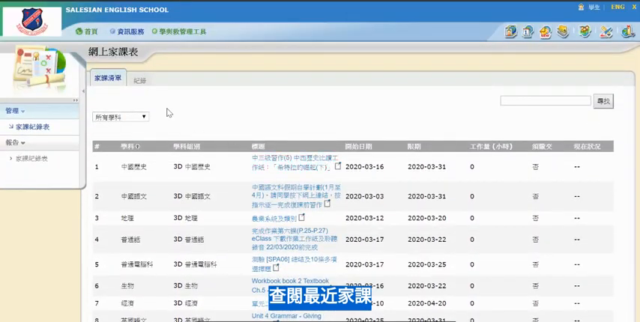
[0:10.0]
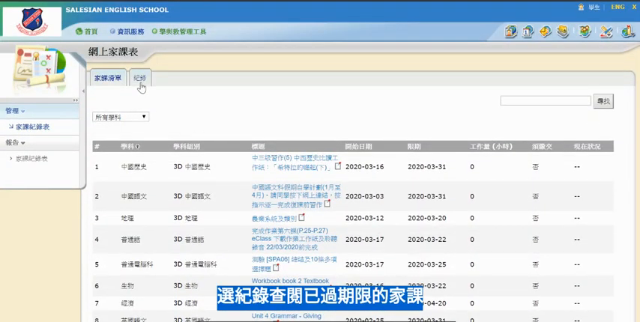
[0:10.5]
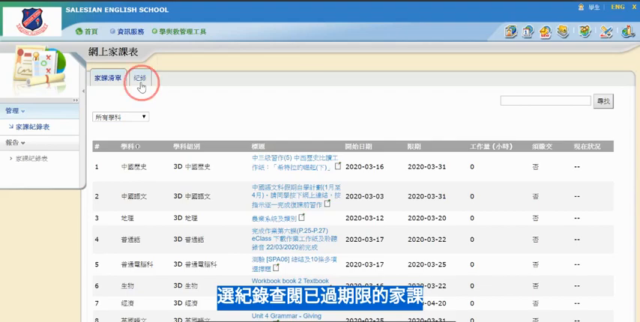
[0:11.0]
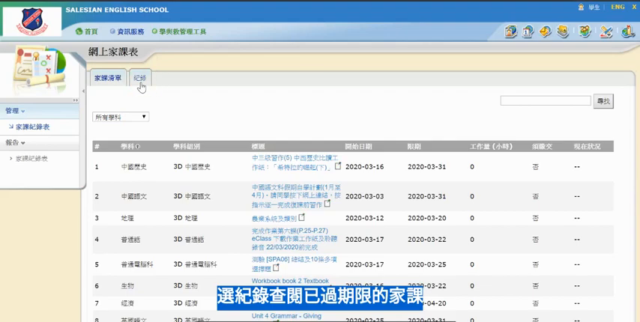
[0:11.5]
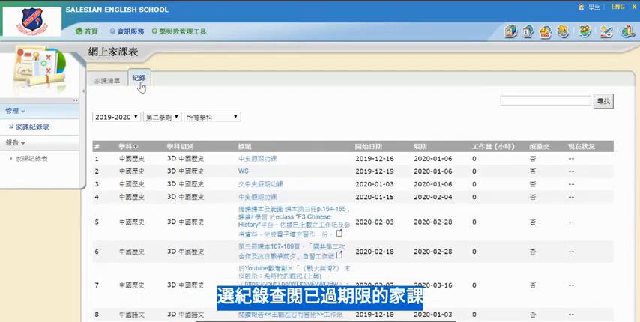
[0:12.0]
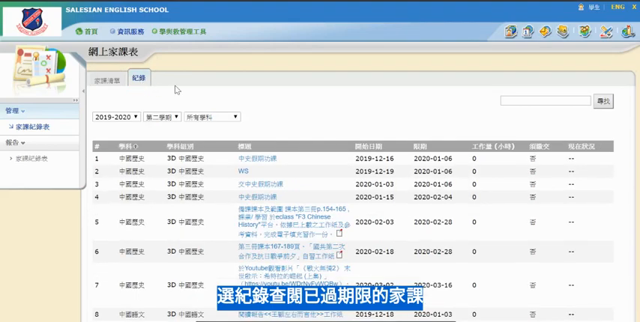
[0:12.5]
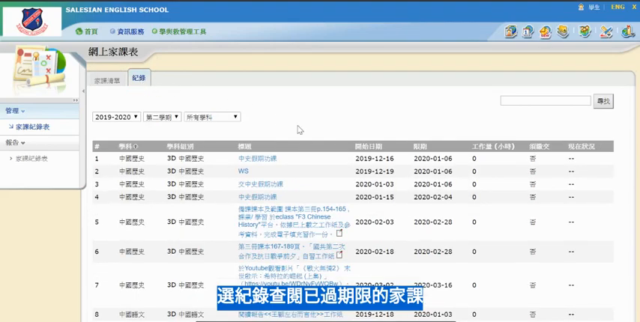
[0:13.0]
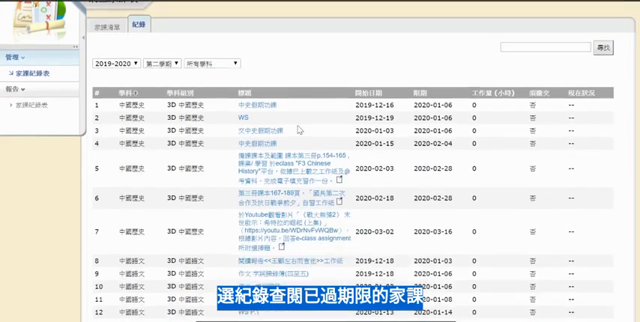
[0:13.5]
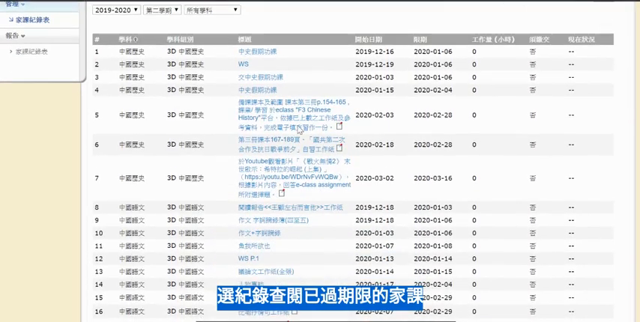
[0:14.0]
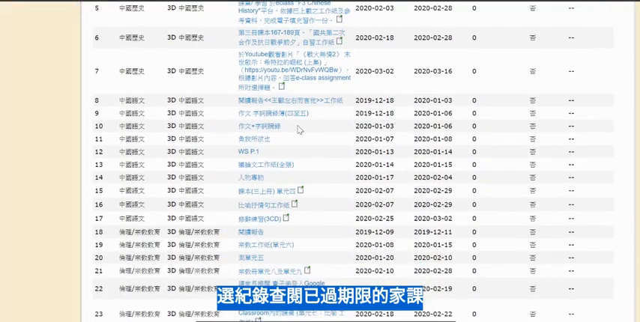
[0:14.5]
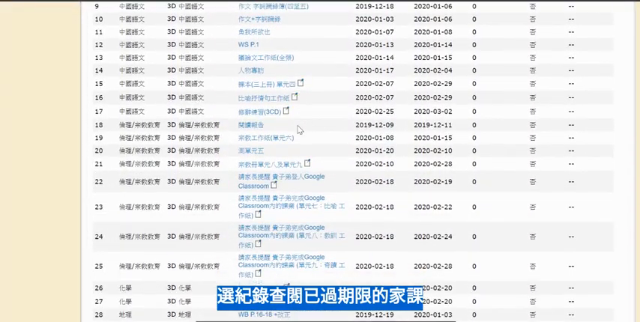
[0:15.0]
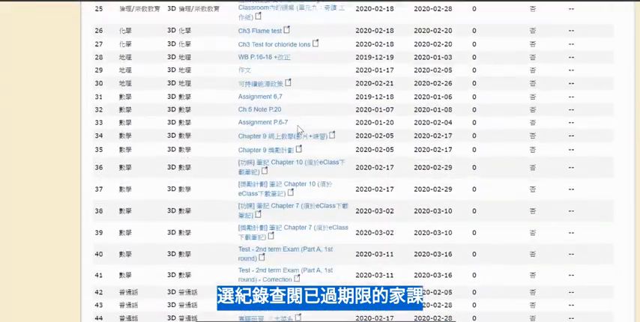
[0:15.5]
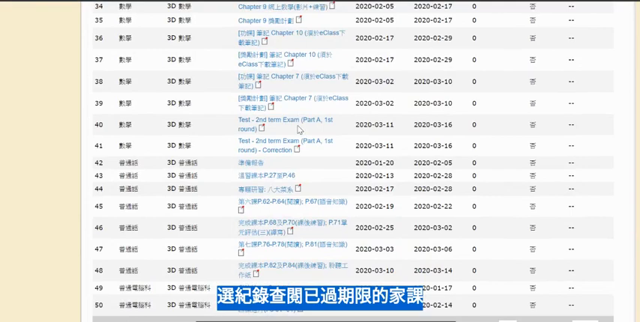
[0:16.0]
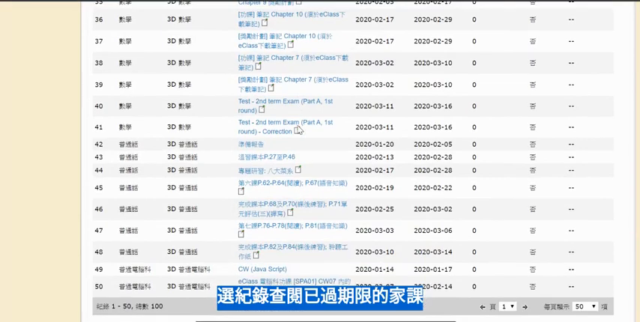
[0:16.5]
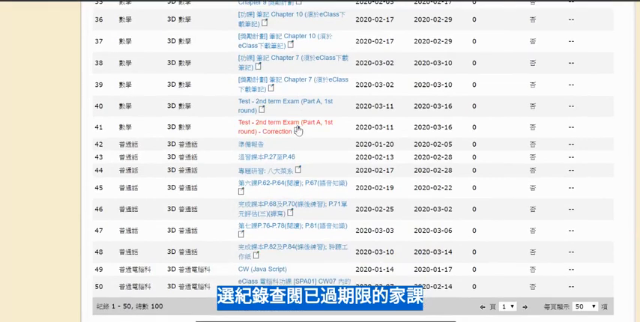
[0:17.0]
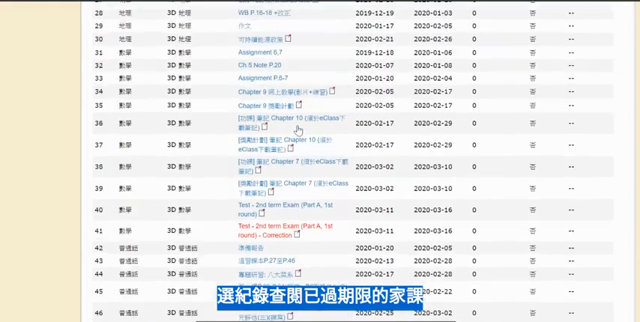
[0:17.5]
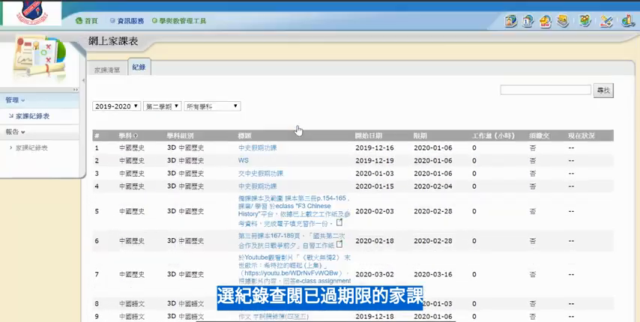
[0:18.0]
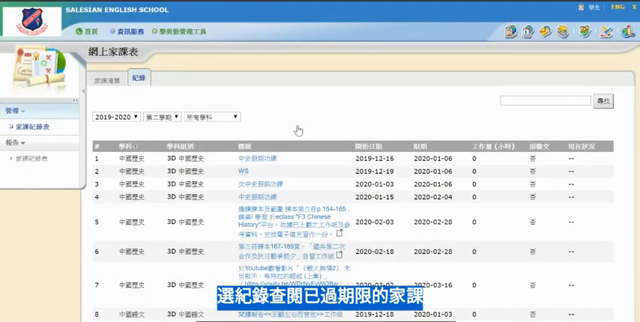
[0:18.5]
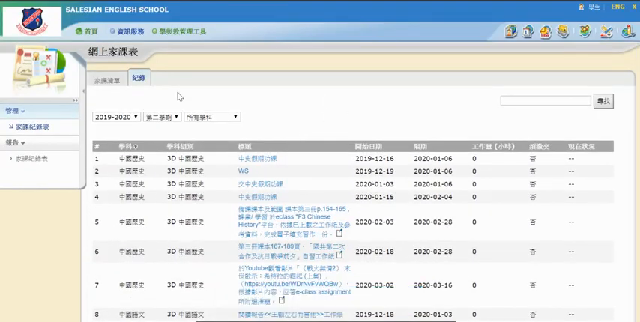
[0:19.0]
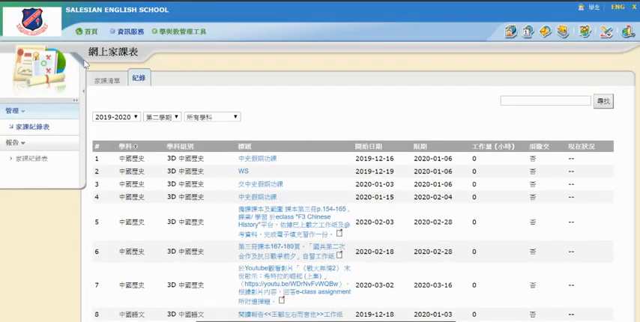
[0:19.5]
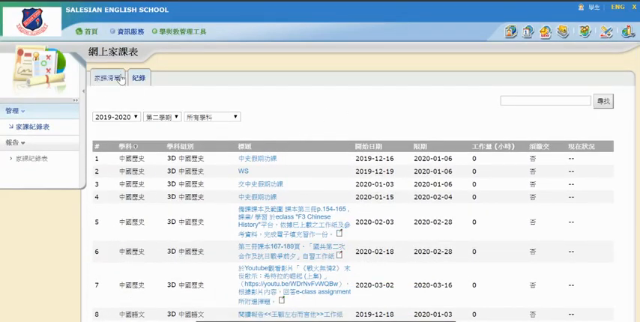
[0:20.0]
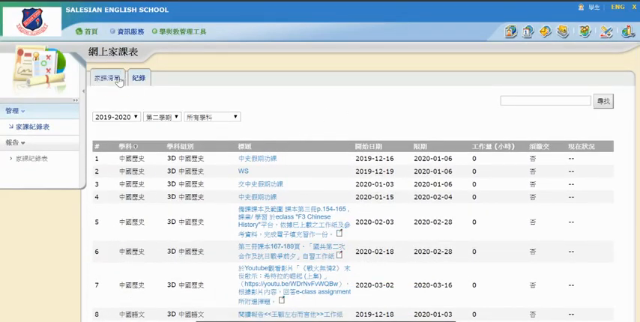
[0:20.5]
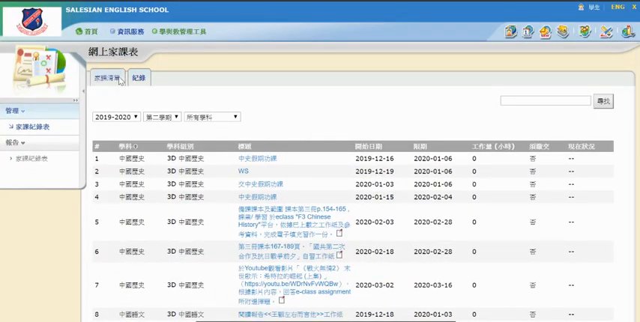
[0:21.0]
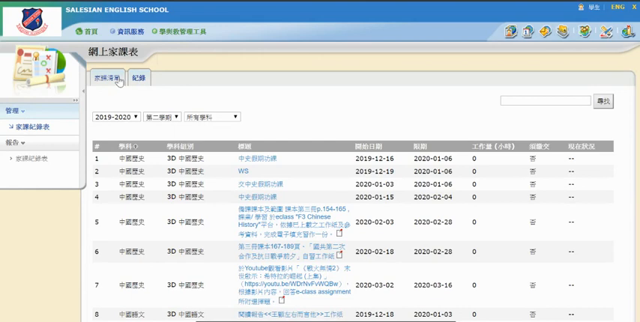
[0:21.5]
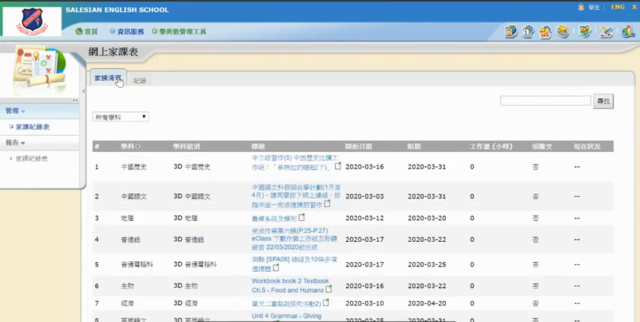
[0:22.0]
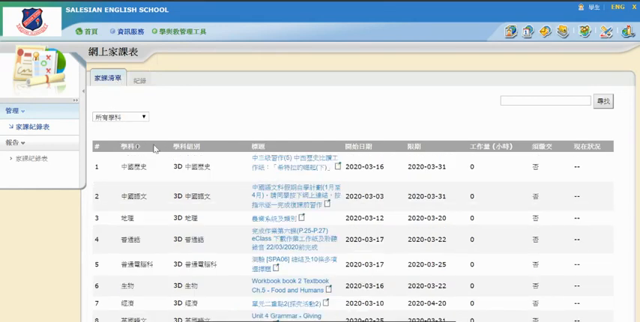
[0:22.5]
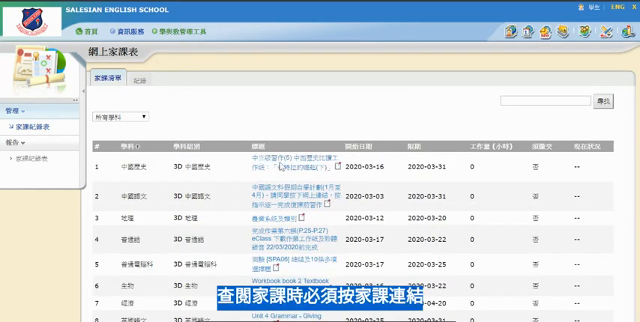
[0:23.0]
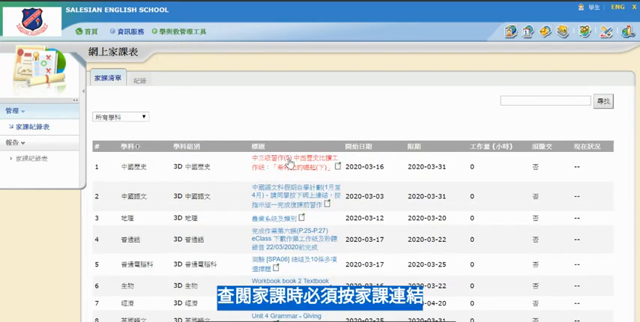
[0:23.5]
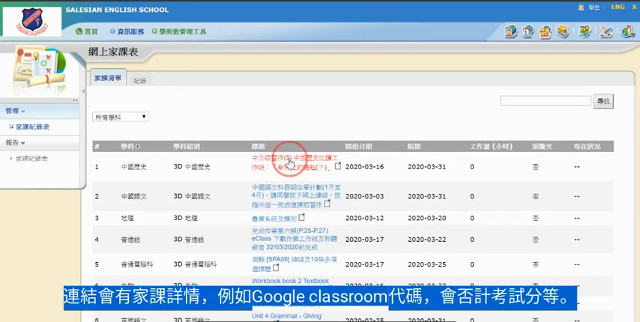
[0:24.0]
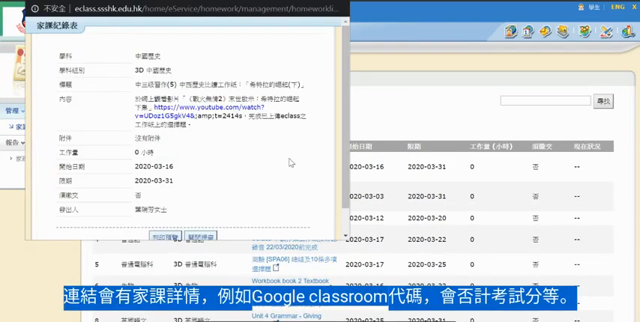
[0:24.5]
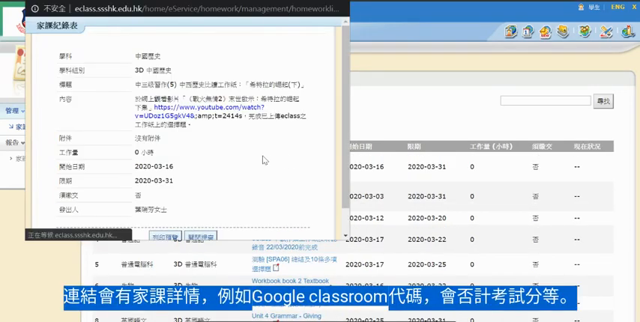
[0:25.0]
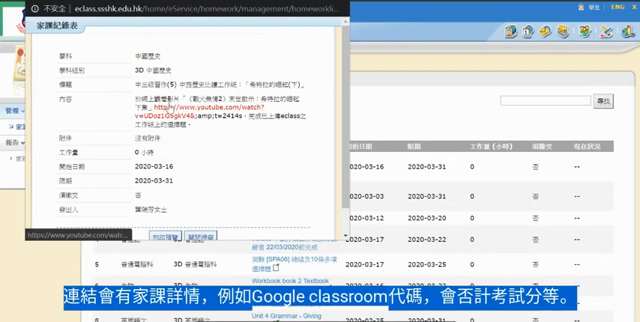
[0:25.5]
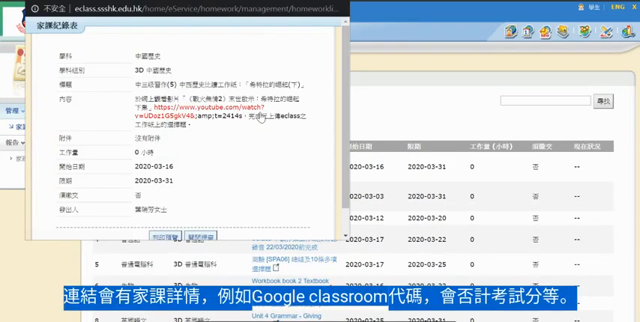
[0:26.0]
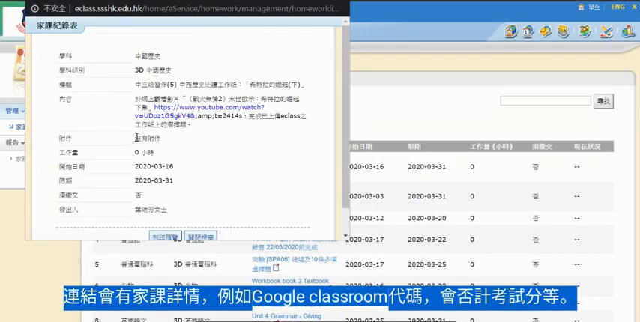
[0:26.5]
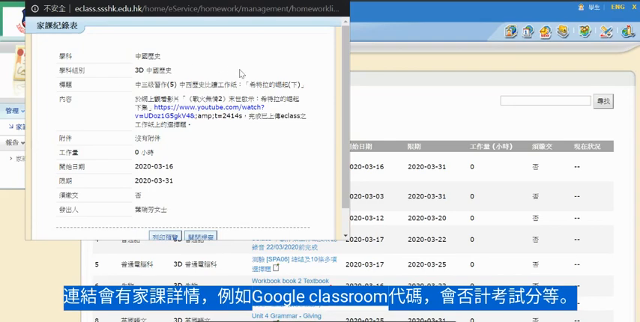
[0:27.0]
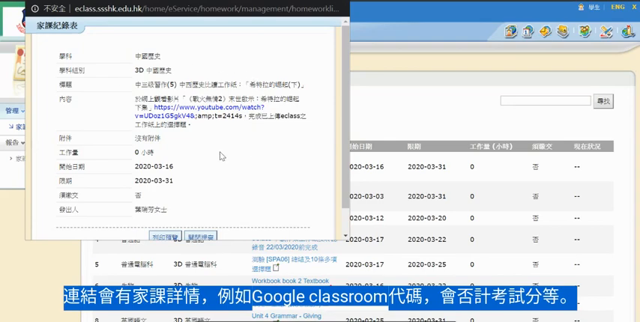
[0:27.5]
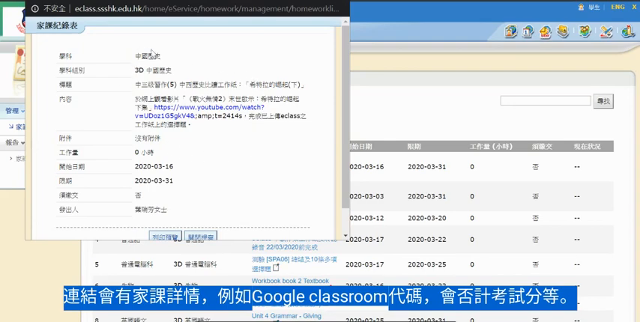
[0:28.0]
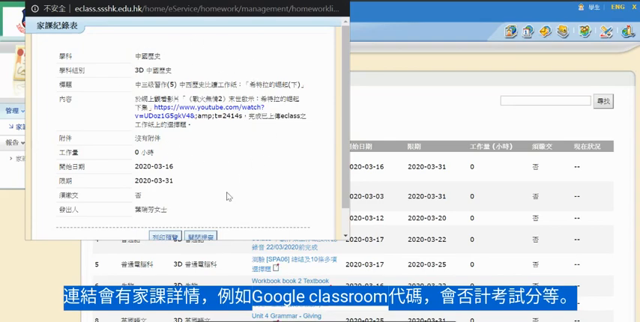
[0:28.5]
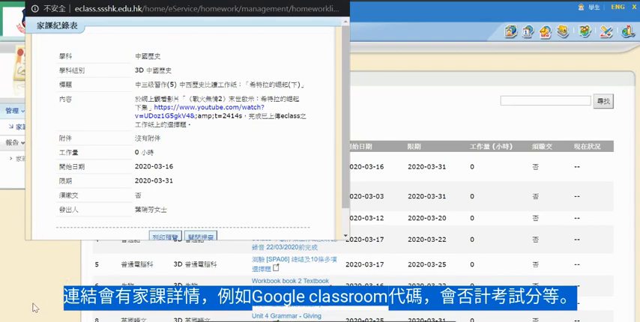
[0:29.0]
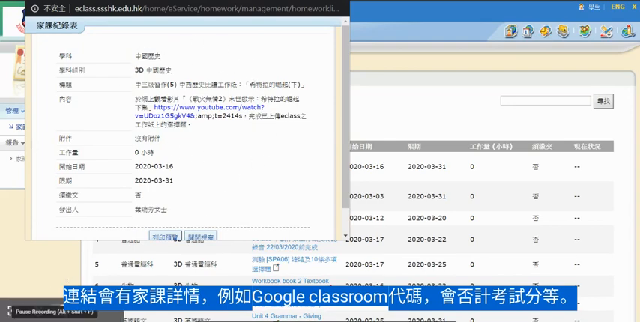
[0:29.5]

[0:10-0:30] At the top of the page, the user clicks the second tab, which has Chinese characters on it; this seems to bring up a new list of results or rearrange the order of the results underneath. The user sort of scrolls down, showing about 50 results with more pages of results. The user then clicks the first tab at the top of the page, which changes the order of the results again. Next, the user selects the file in the top, third-column box, which is highlighted in blue. Clicking the link opens a pop-up box containing some text in Chinese, a YouTube video link and some dates. The app appears to be some type of scheduling app for assignments, tests or lesson plans at an English school located in China.